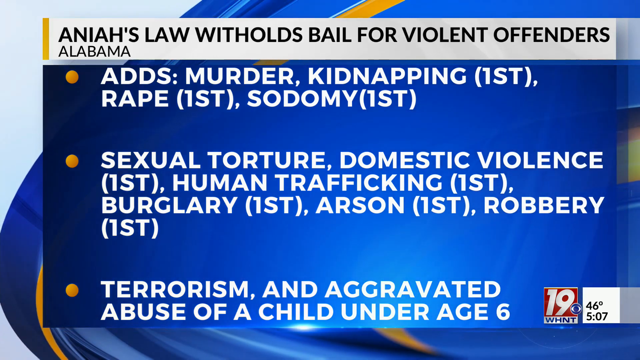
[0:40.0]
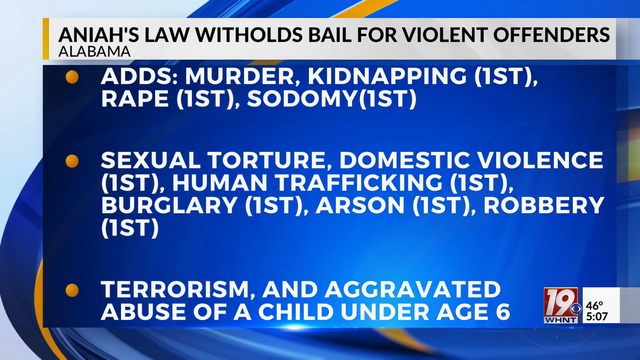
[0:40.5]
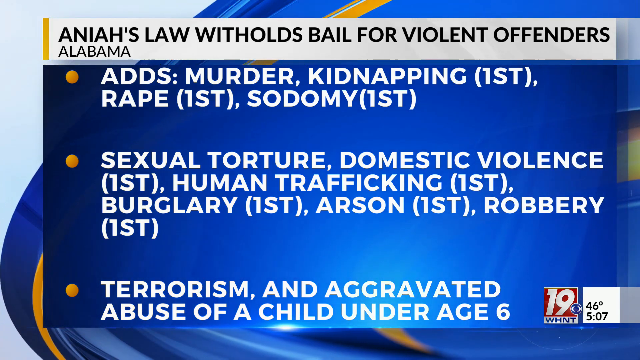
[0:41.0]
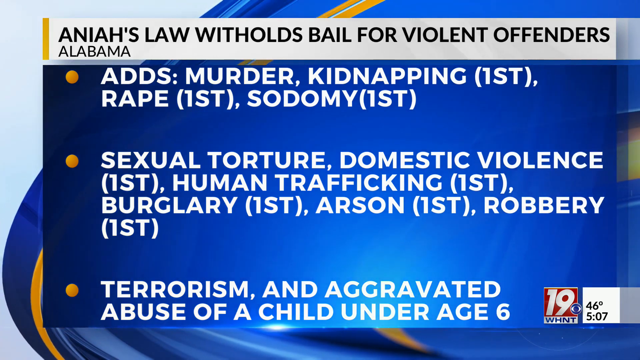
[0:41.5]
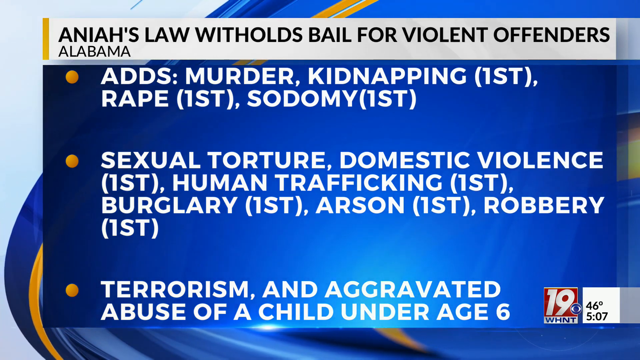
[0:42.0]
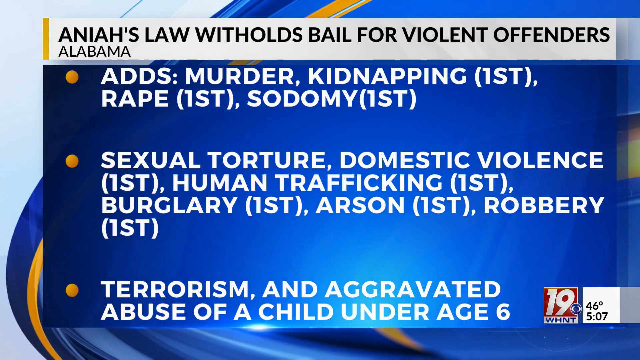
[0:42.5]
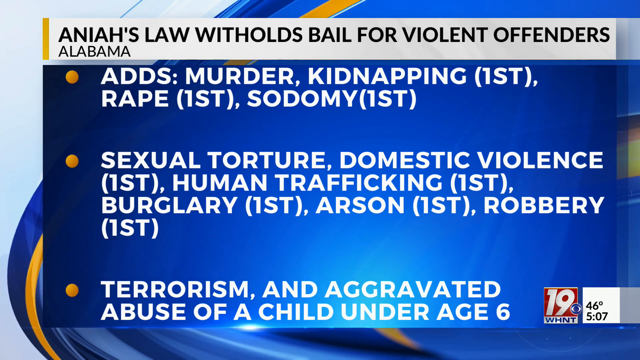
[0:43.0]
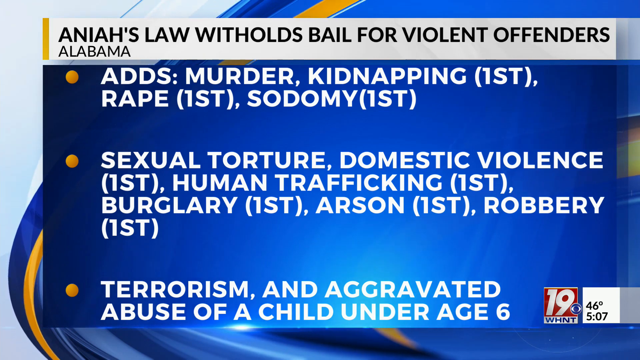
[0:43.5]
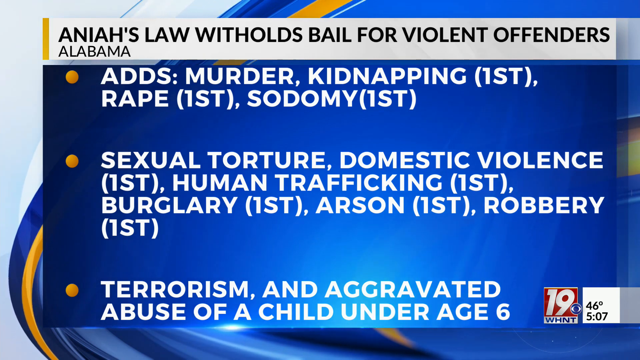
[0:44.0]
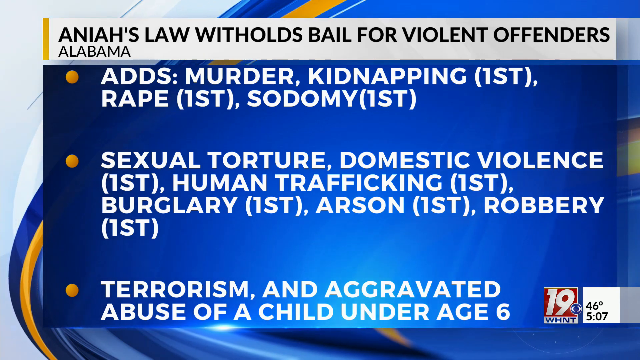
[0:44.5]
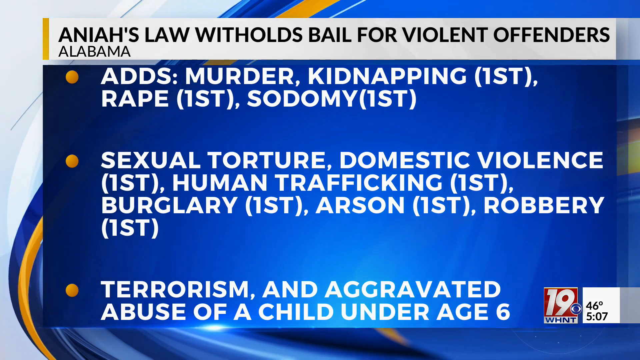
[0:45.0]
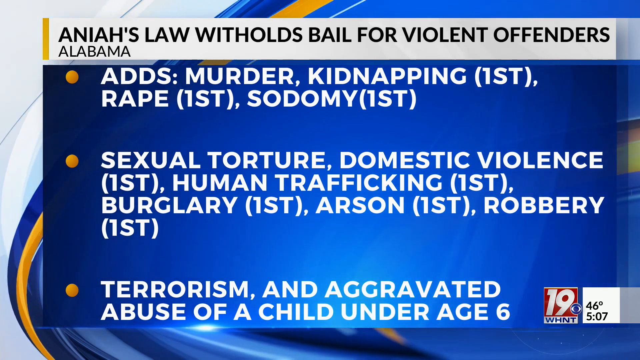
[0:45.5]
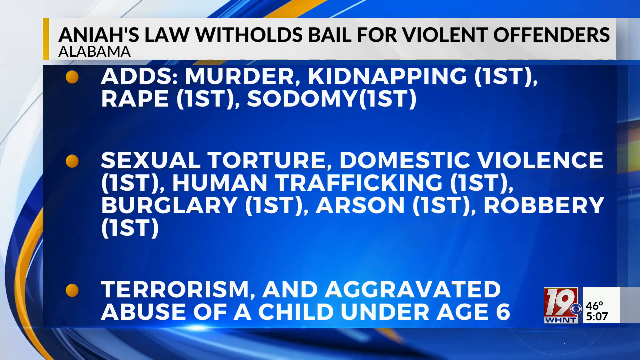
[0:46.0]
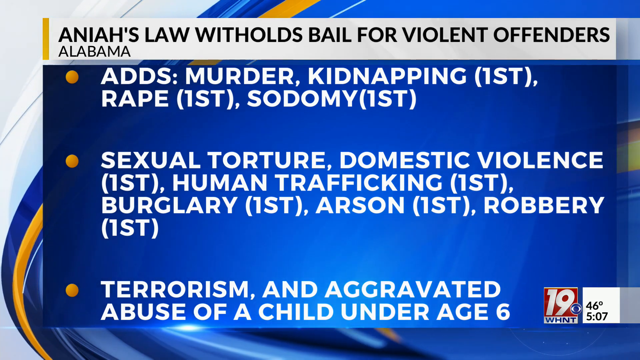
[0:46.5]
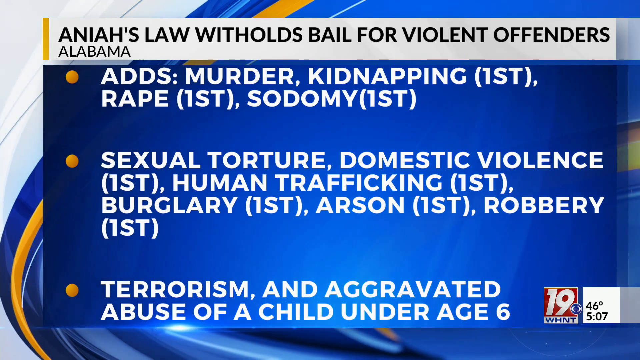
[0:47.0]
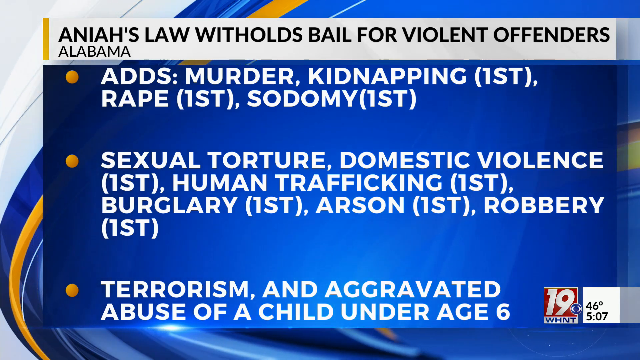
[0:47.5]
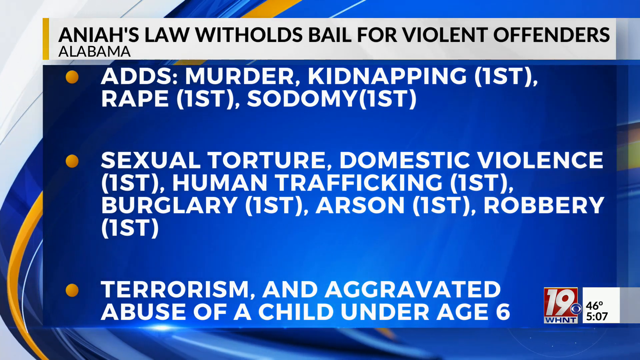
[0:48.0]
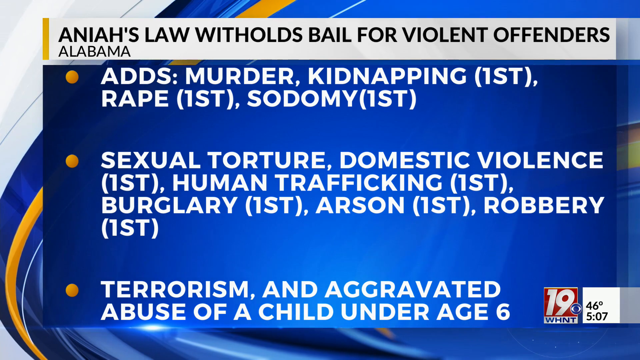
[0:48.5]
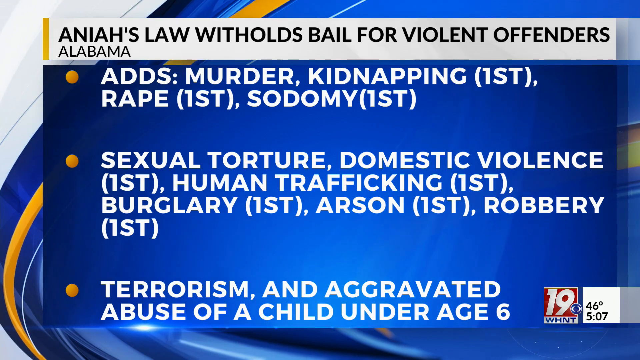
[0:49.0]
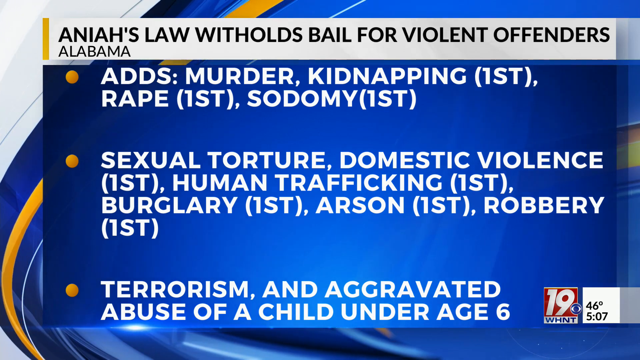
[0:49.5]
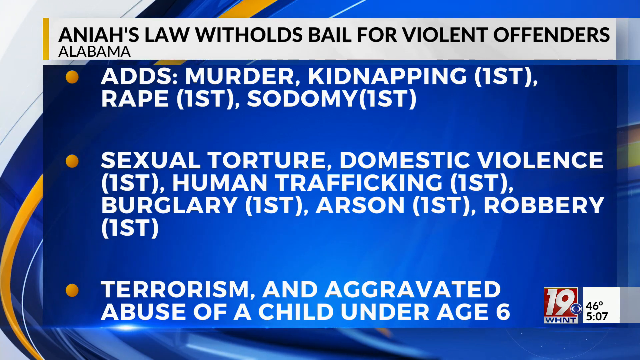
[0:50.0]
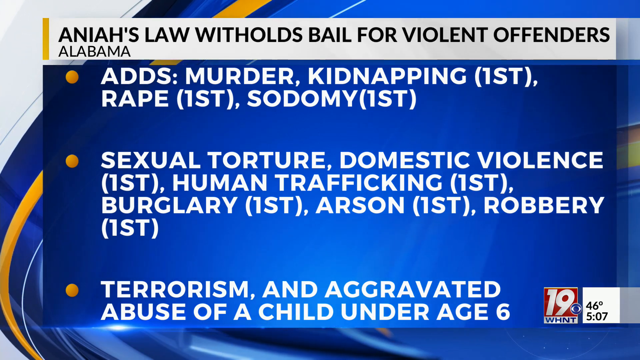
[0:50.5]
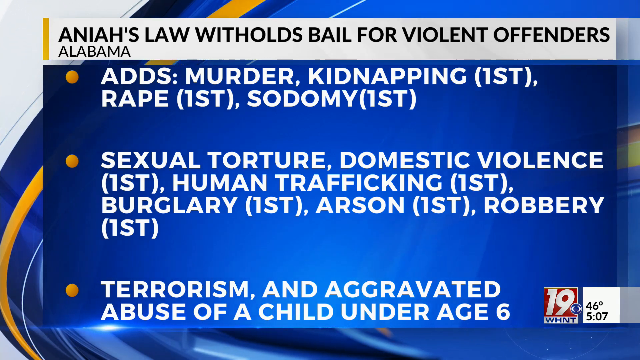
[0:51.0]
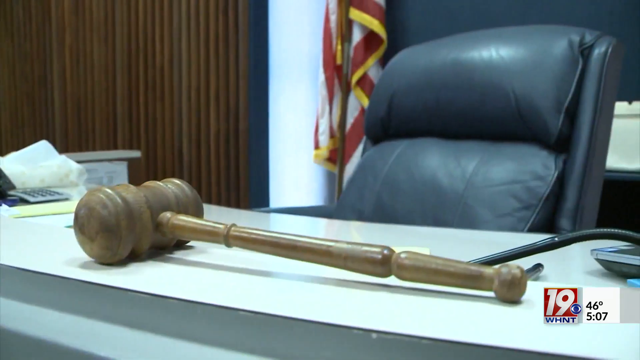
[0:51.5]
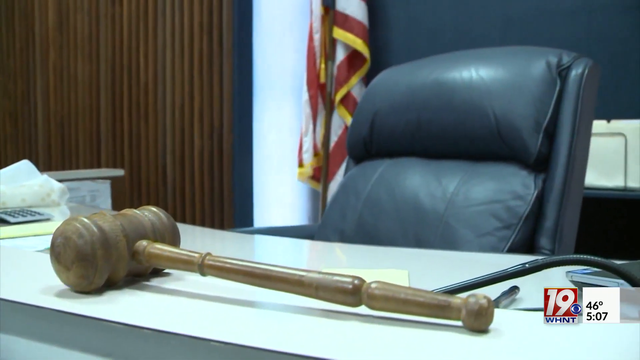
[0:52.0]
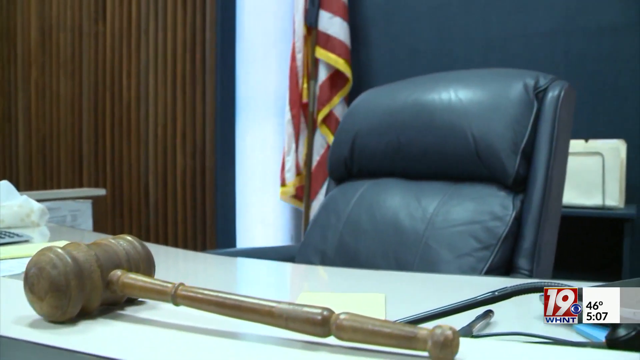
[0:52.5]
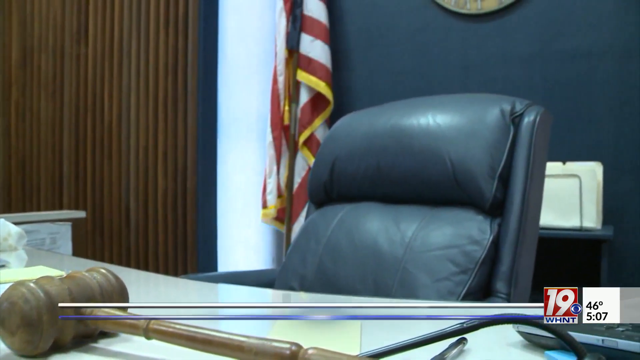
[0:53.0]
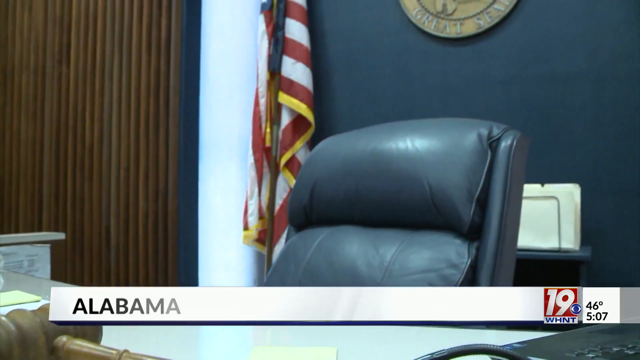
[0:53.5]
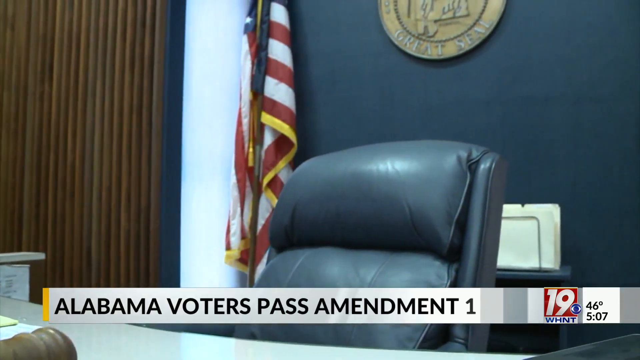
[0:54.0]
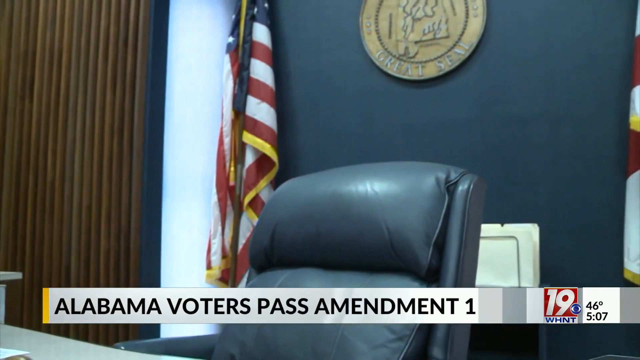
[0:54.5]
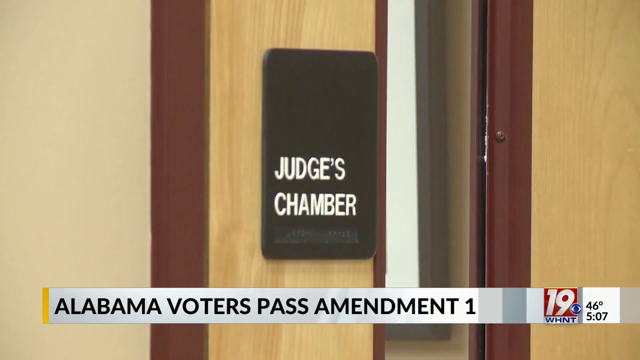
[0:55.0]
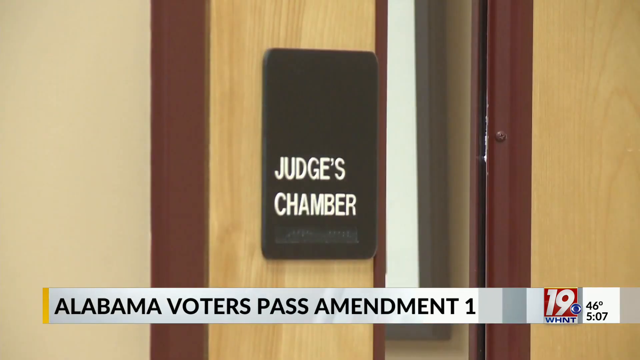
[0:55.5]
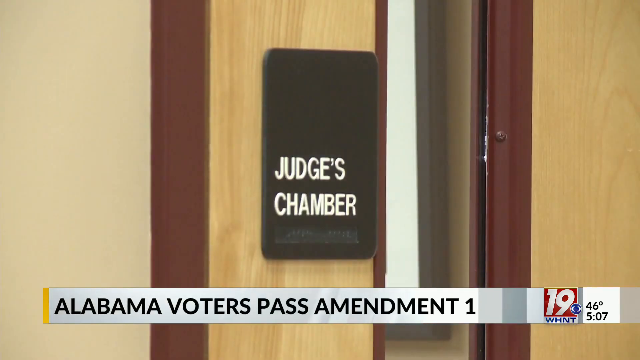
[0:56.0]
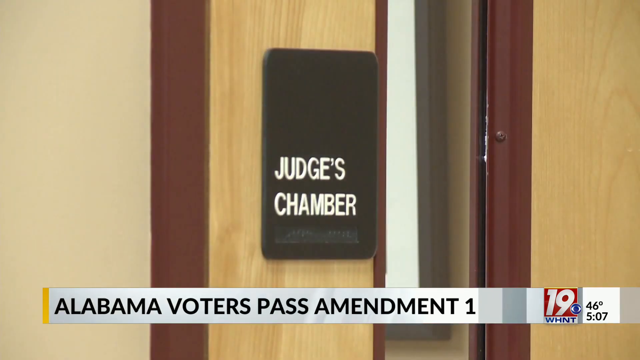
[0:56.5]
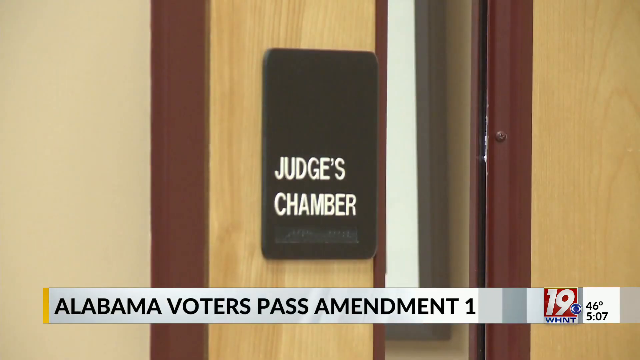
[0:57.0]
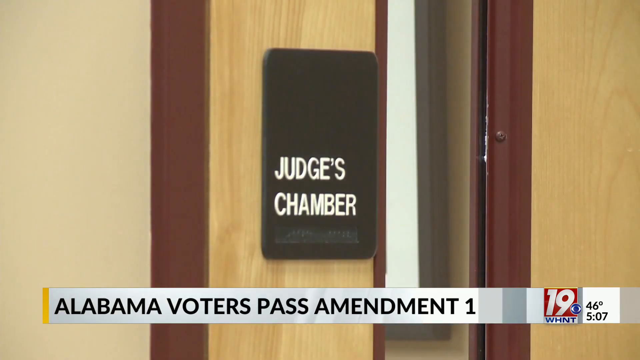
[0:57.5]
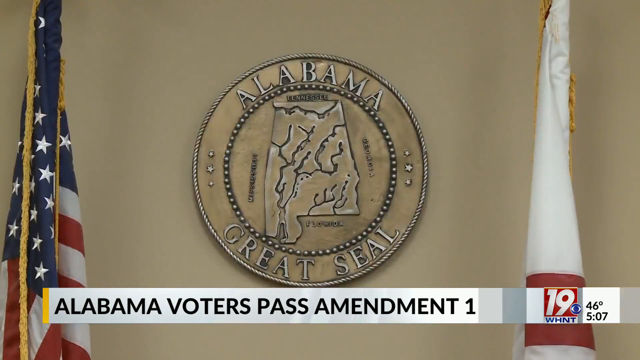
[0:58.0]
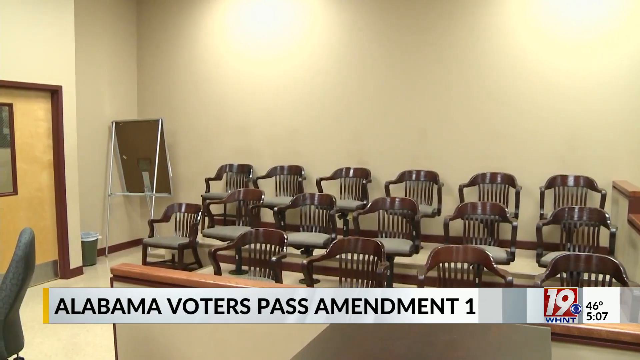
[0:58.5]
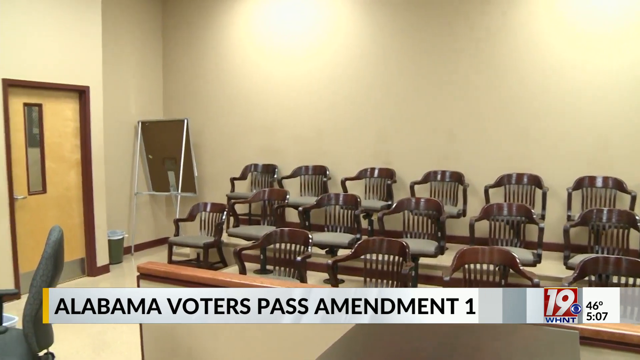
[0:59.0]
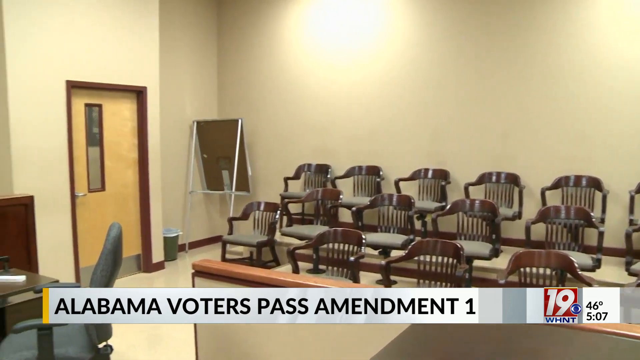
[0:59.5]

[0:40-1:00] The new law, which changes certain offenses so they no longer allow bail, is presented: it adds murder, kidnapping, rape, sodomy, sexual torture, domestic violence in the first degree, human trafficking in the first degree, burglary in the first degree, arson in the first degree, robbery in the first degree, terrorism and aggravated abuse of a child under the age of six. The view returns to the inside of the judge's chamber, showing his gavel and the judge's chair. Text reads "Alabama voters pass amendment one". An image of the judge's chamber doors is shown, along with the Alabama seal and the chairs where the jurors would sit.